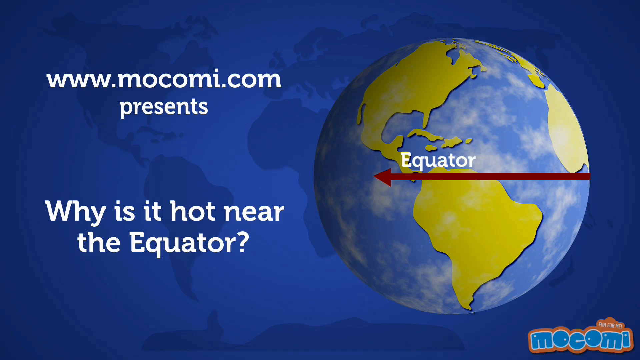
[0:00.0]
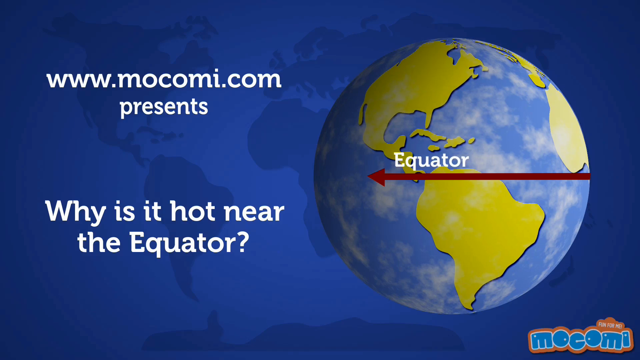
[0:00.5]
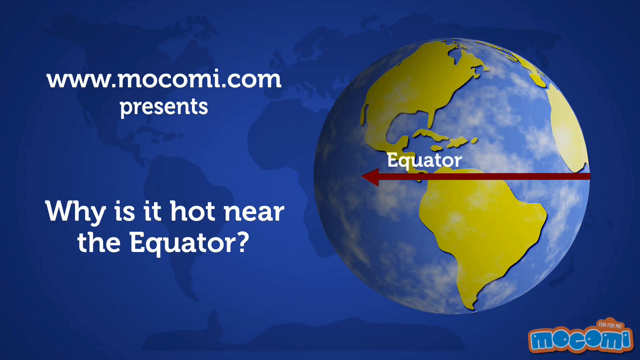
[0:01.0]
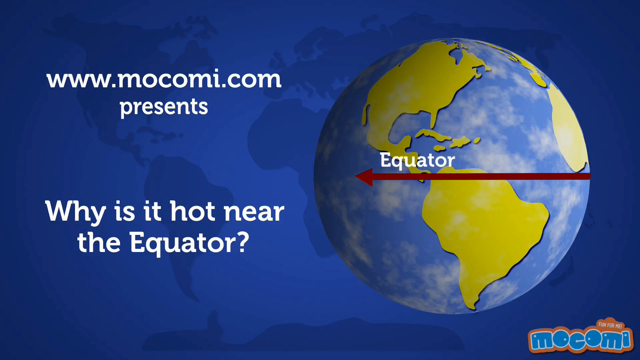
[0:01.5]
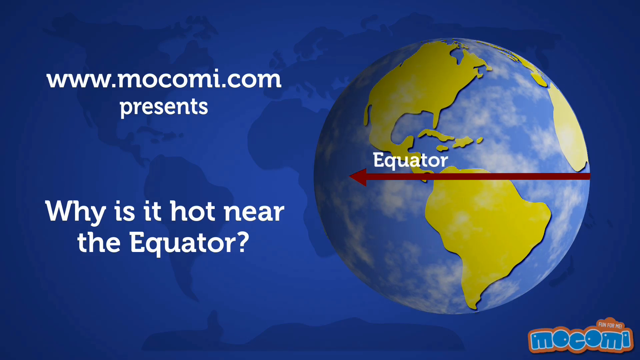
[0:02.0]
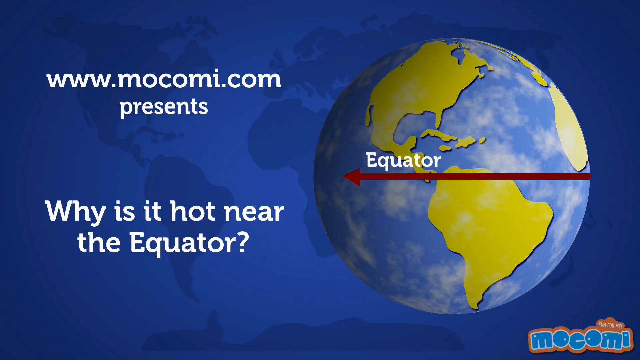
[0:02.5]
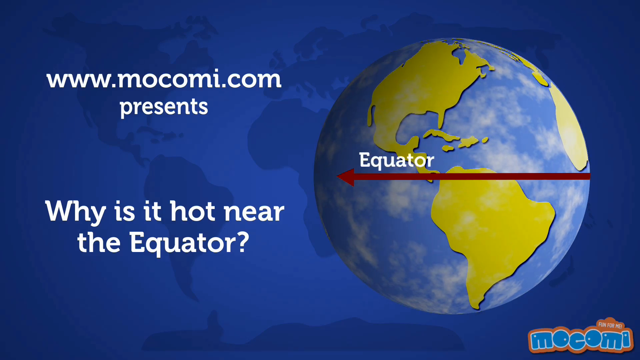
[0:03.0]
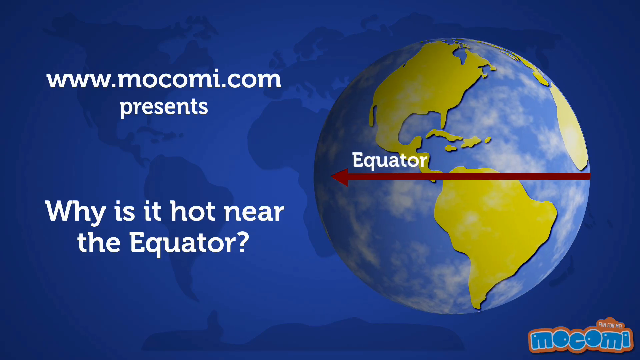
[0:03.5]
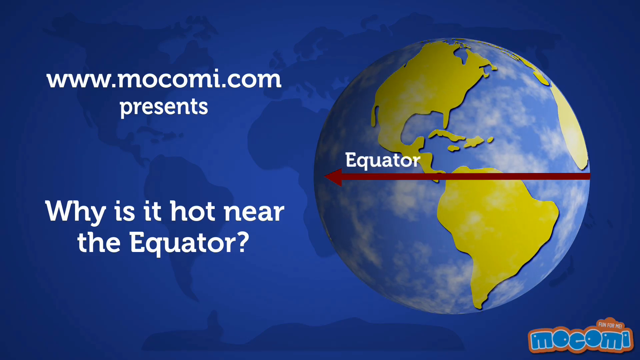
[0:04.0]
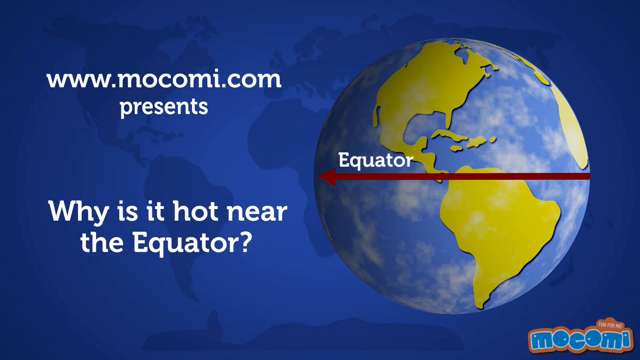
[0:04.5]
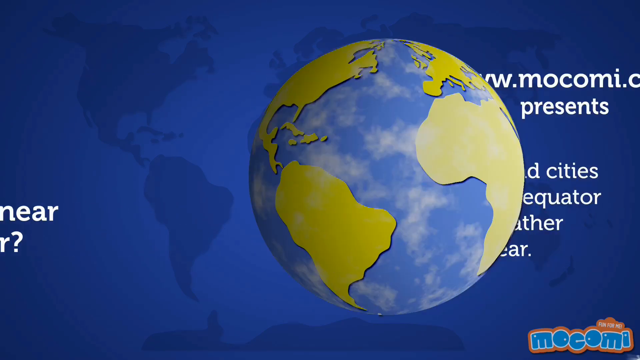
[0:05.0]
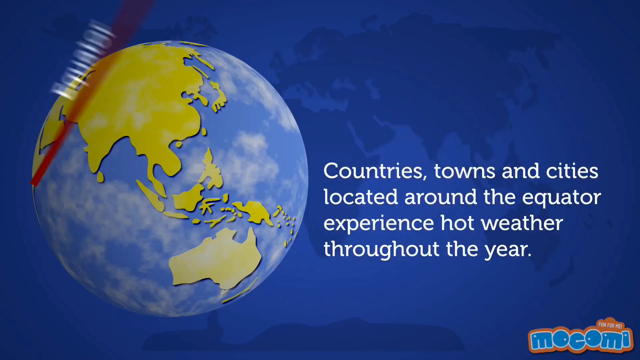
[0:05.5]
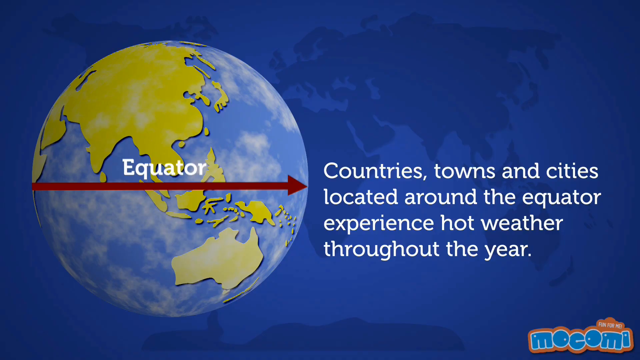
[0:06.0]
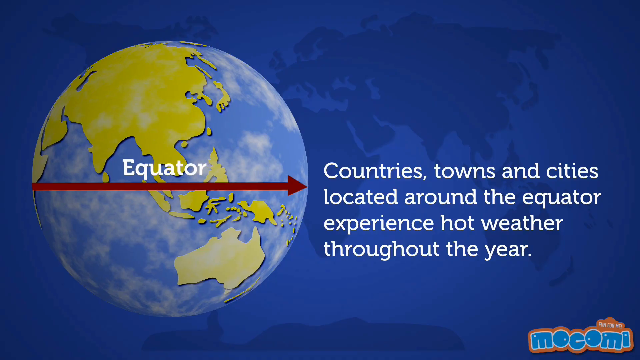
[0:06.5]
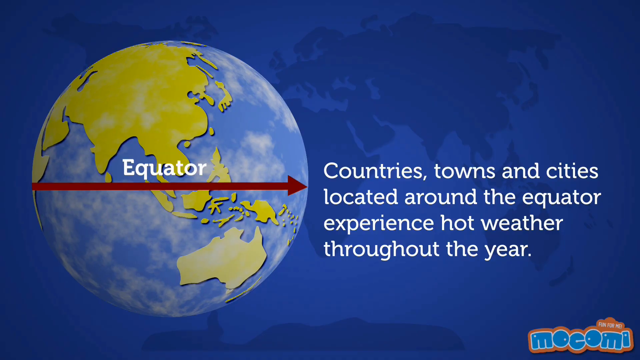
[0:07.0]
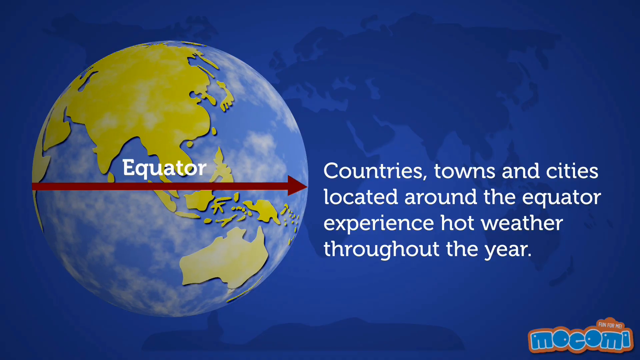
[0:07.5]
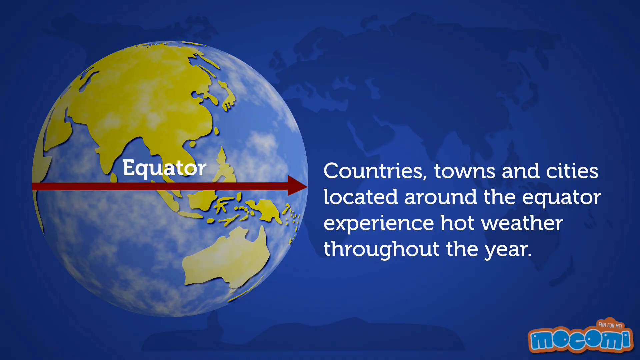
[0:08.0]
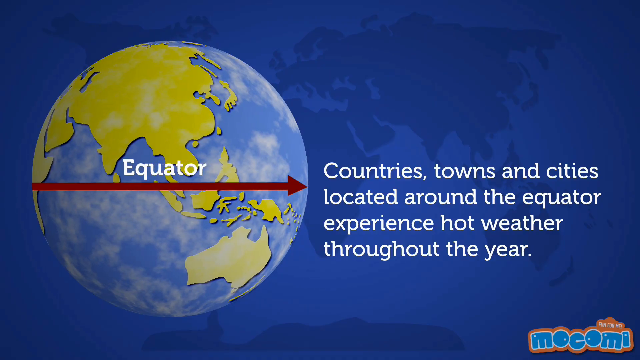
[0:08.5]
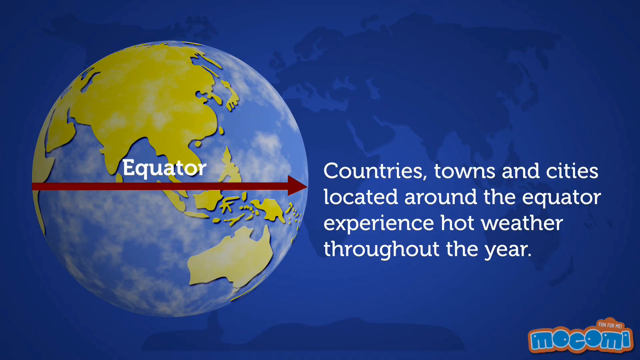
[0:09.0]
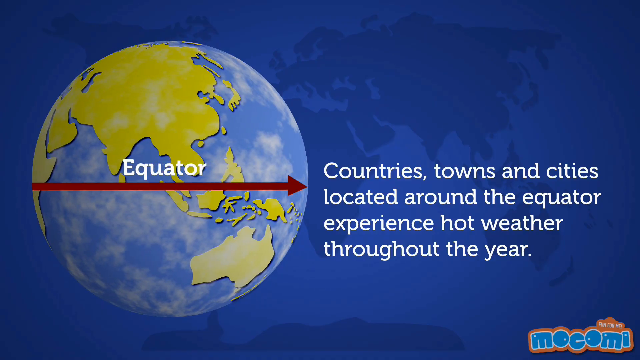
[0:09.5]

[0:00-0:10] The main subject seems to be the equator and the planet. The Earth is shown with water that has clouds over it and no textures, and lime green continents that appear to be shaped properly. The Earth spins slowly, and a red bar crosses the center of the Earth slowly with the word "equator" above it. In the background there is a map of the Earth in hues of blue. The company is shown, apparently with a website where more information can be found. The colors are neither too bright nor too dark.